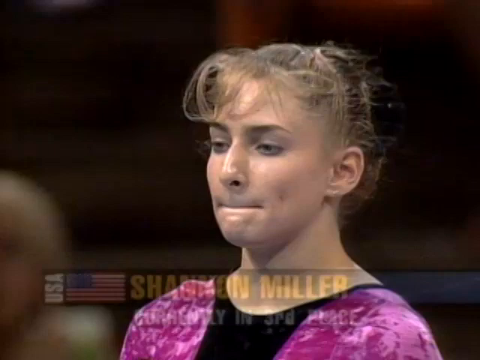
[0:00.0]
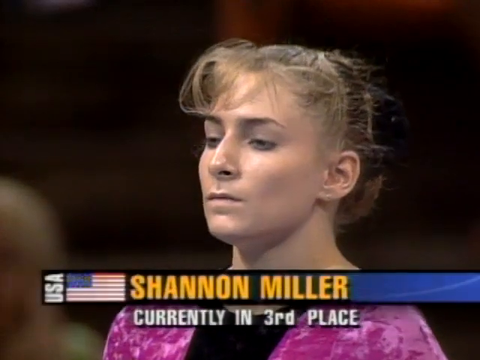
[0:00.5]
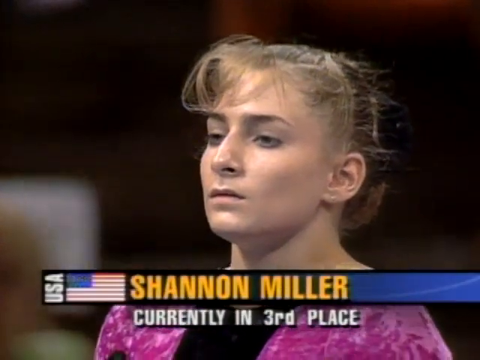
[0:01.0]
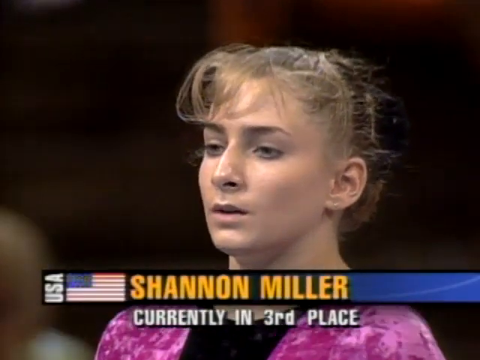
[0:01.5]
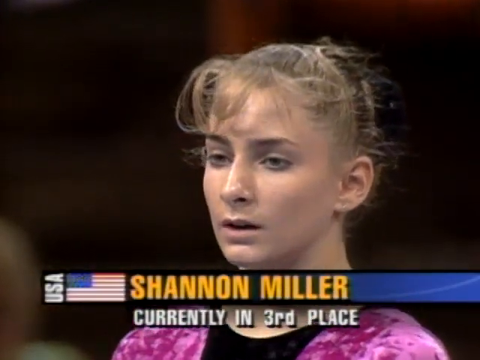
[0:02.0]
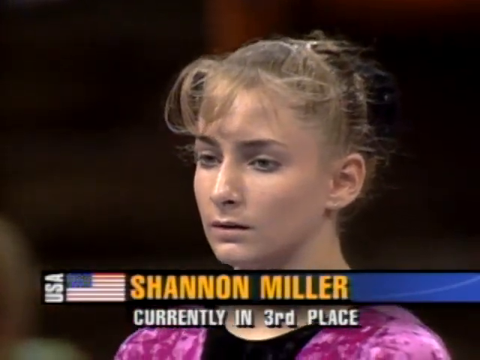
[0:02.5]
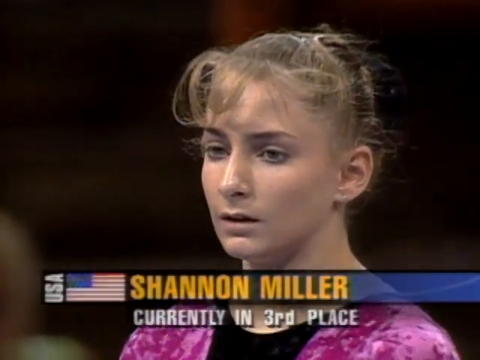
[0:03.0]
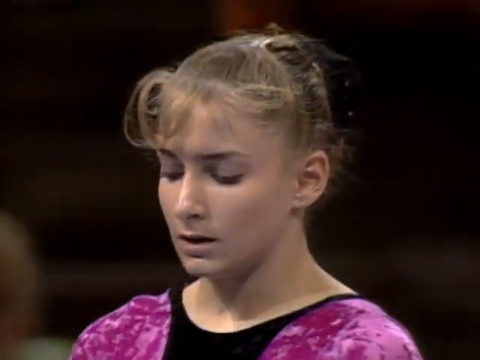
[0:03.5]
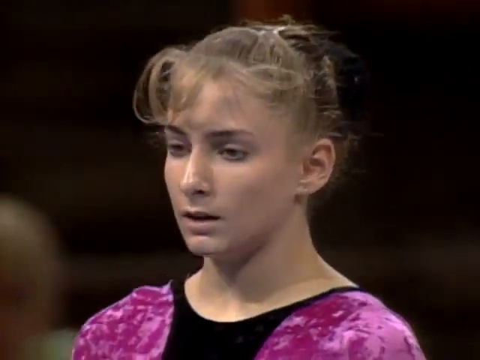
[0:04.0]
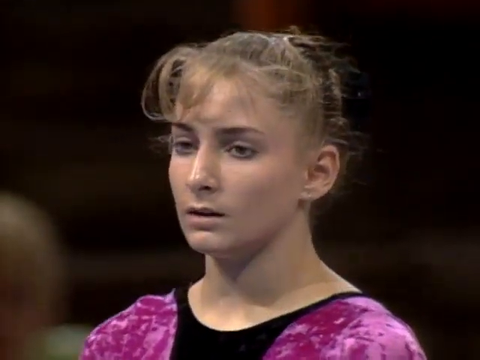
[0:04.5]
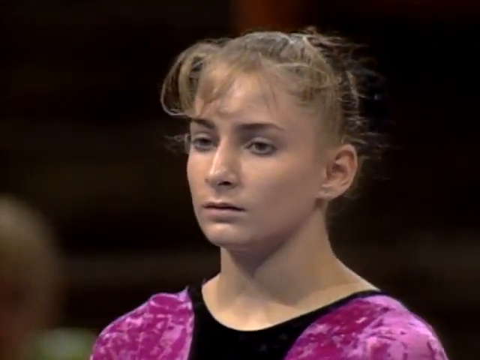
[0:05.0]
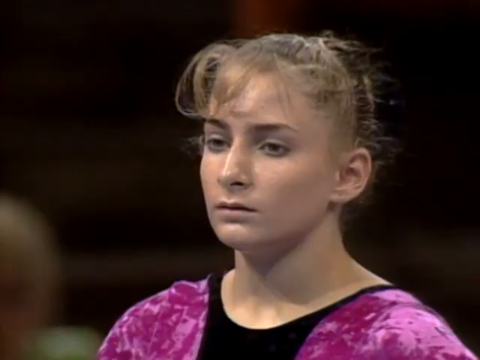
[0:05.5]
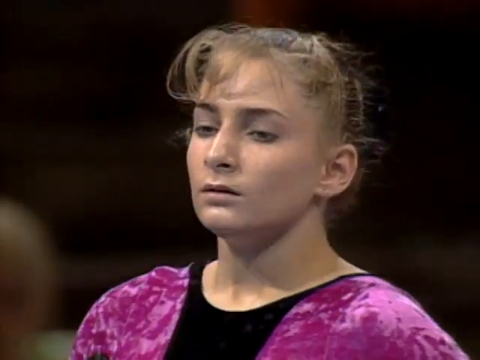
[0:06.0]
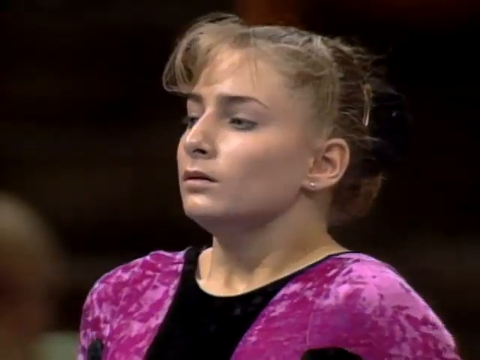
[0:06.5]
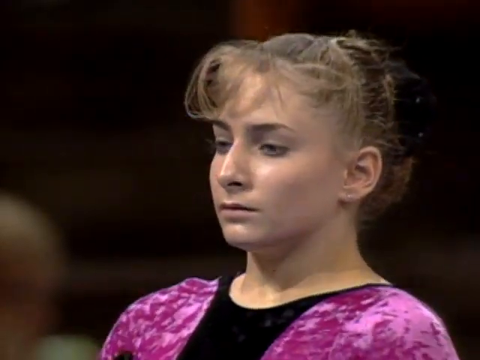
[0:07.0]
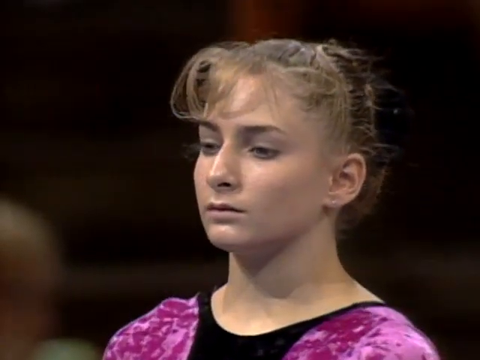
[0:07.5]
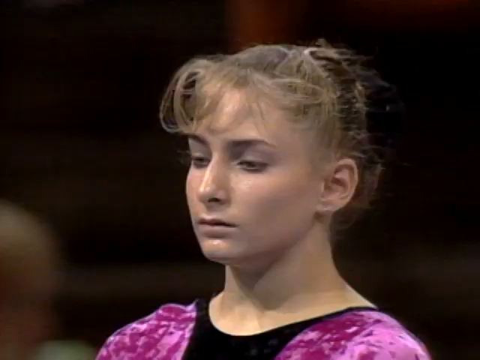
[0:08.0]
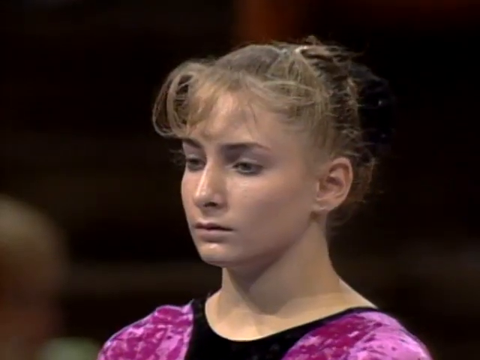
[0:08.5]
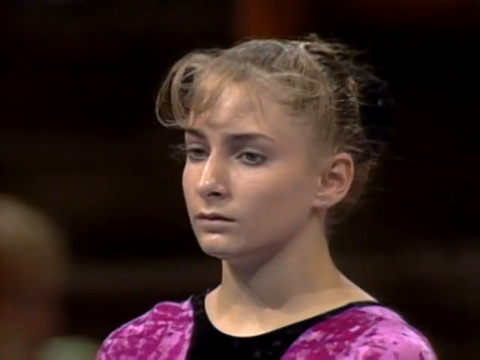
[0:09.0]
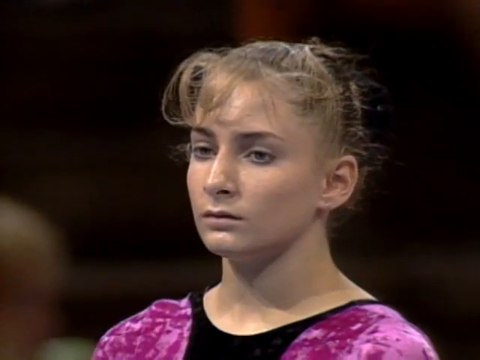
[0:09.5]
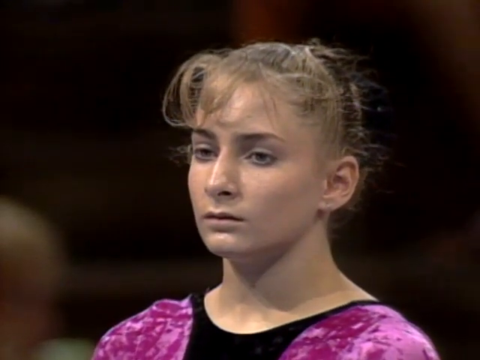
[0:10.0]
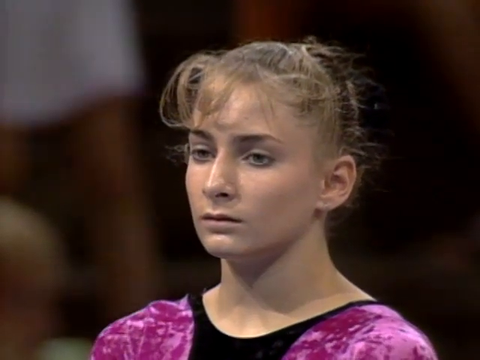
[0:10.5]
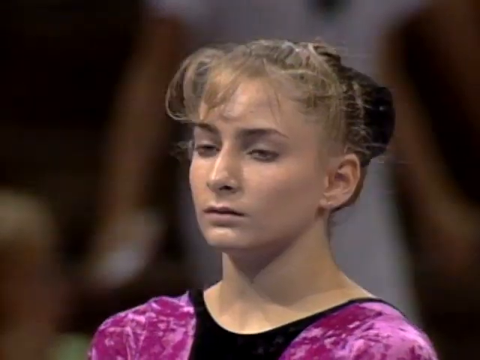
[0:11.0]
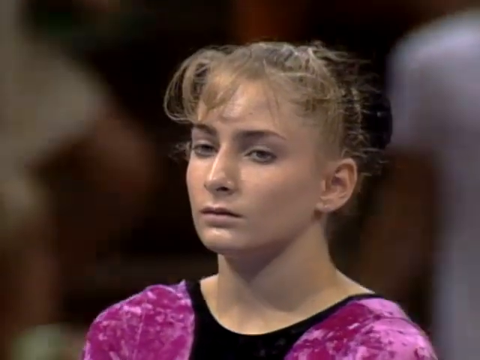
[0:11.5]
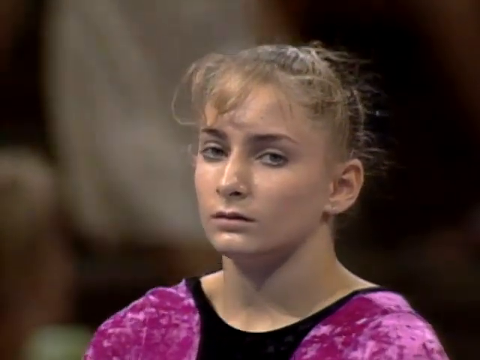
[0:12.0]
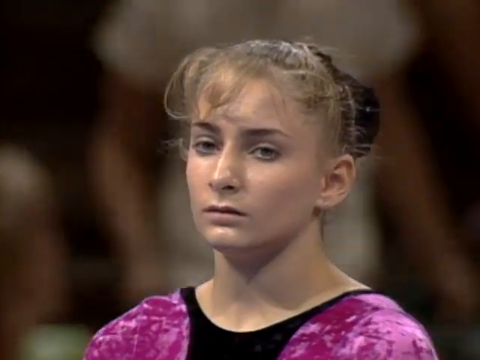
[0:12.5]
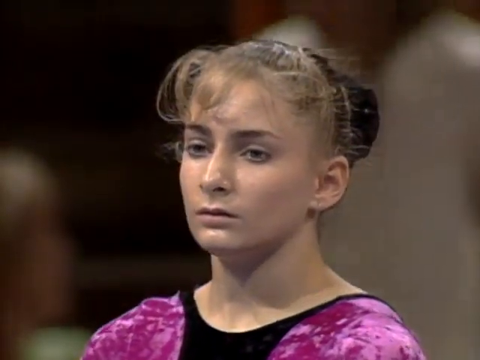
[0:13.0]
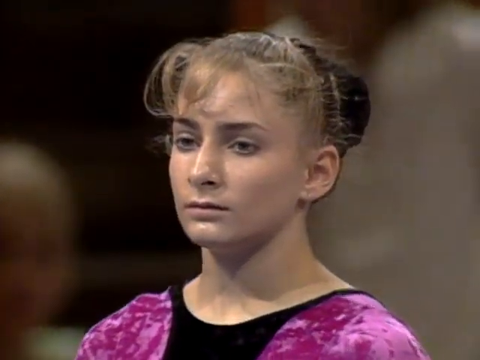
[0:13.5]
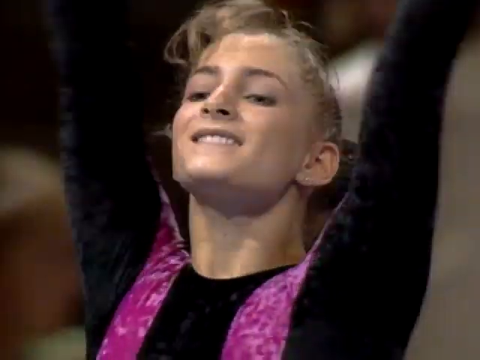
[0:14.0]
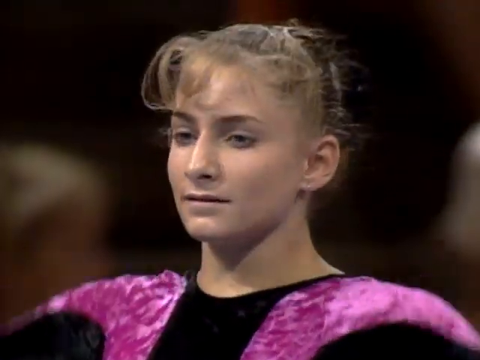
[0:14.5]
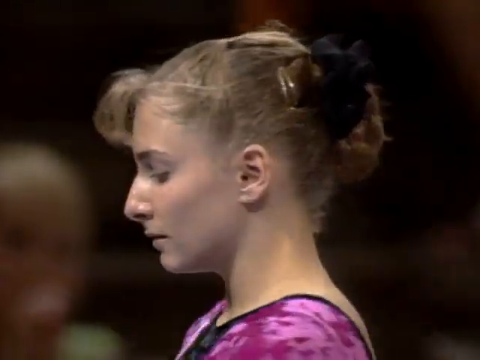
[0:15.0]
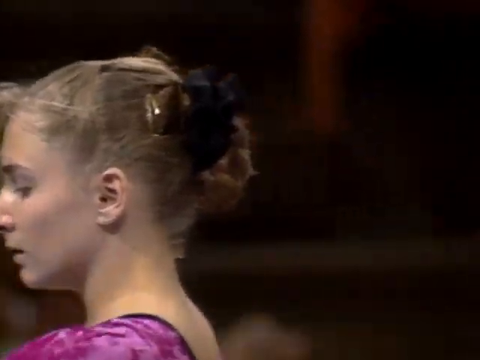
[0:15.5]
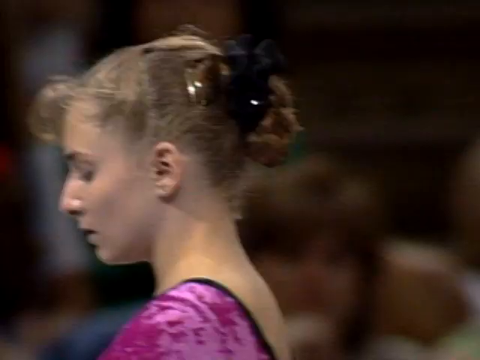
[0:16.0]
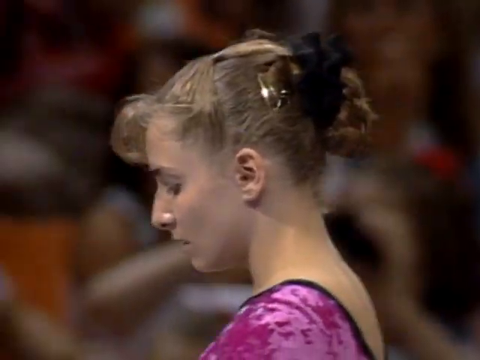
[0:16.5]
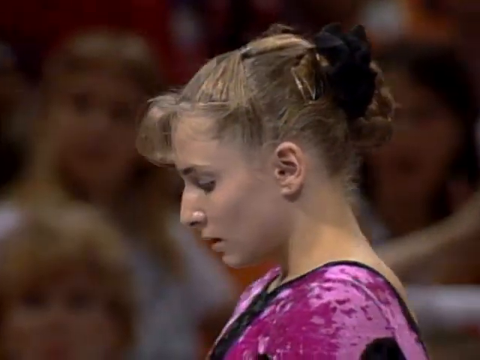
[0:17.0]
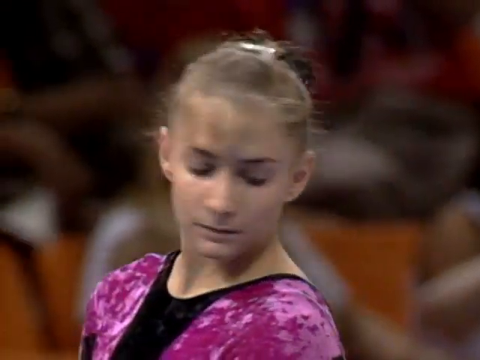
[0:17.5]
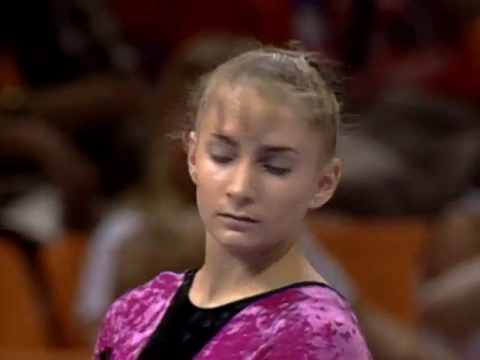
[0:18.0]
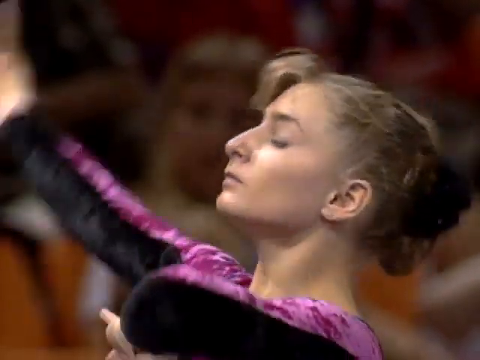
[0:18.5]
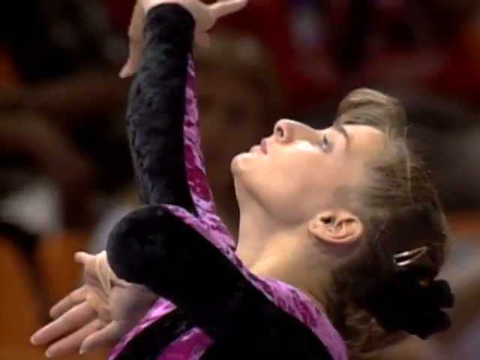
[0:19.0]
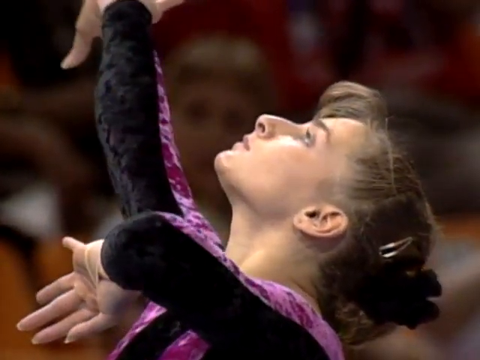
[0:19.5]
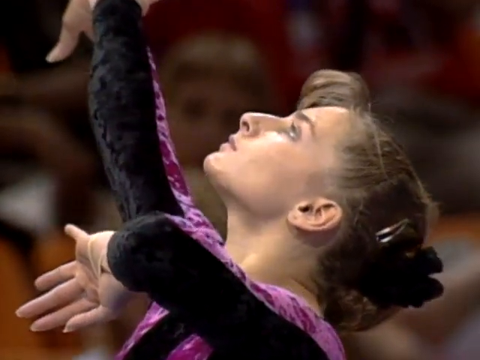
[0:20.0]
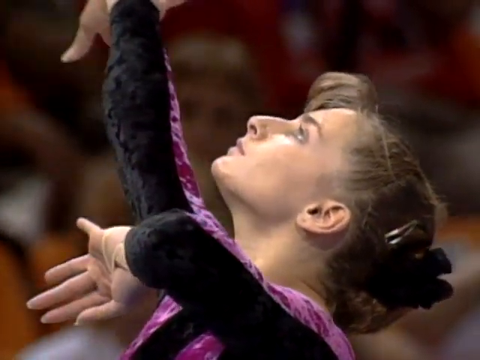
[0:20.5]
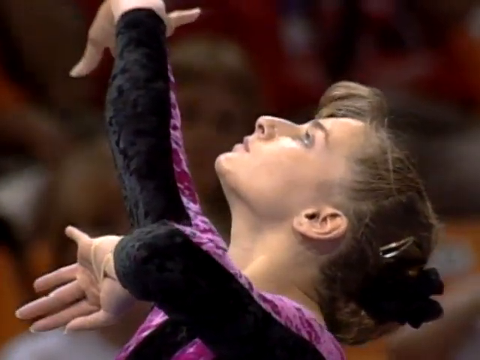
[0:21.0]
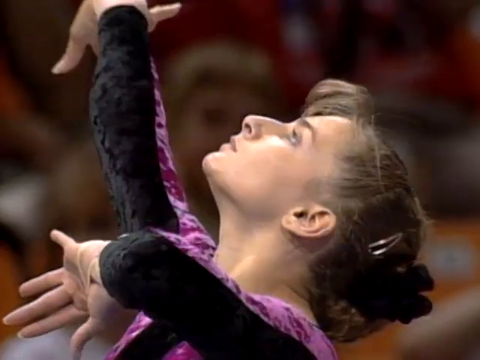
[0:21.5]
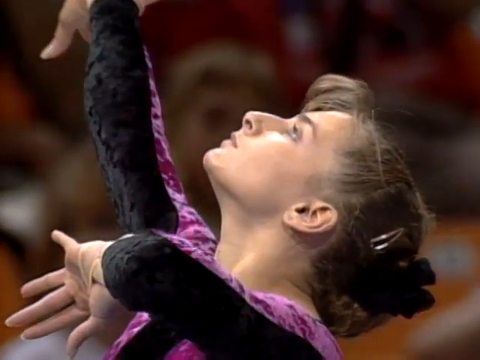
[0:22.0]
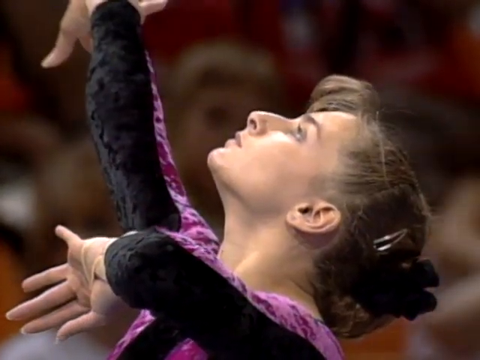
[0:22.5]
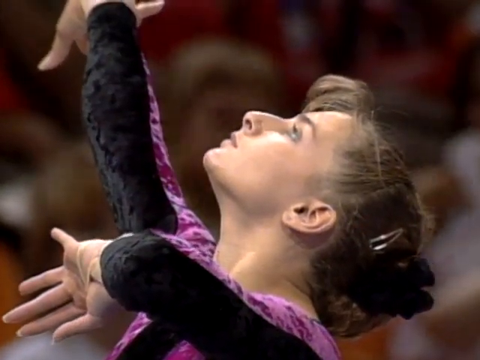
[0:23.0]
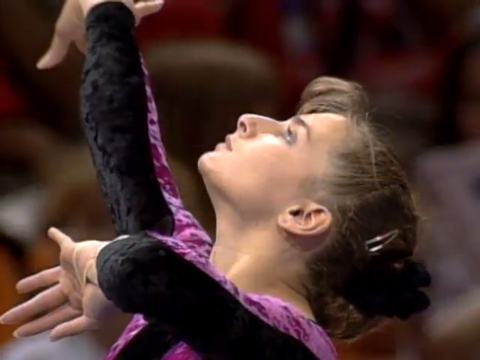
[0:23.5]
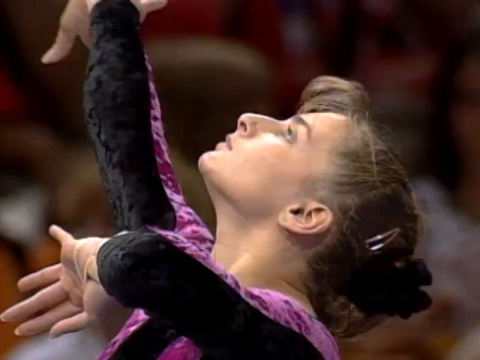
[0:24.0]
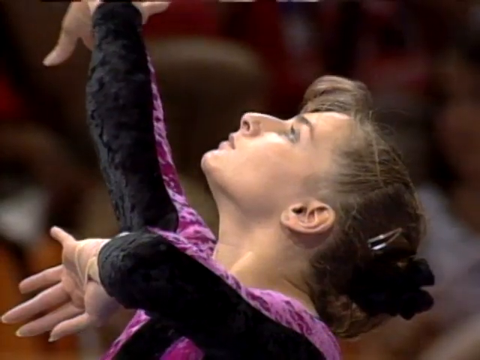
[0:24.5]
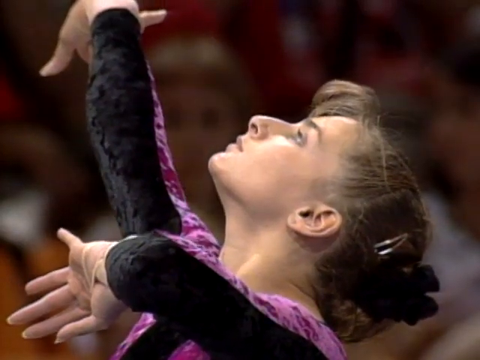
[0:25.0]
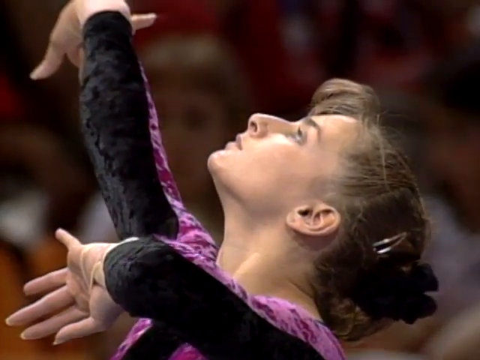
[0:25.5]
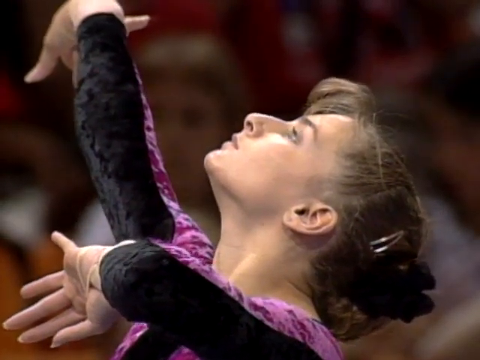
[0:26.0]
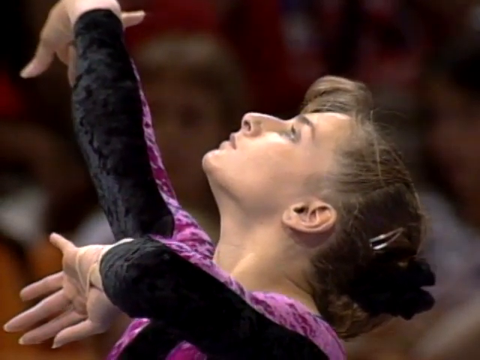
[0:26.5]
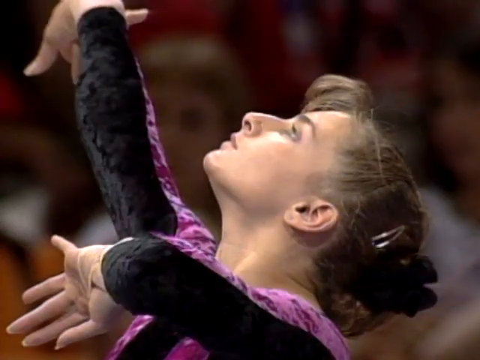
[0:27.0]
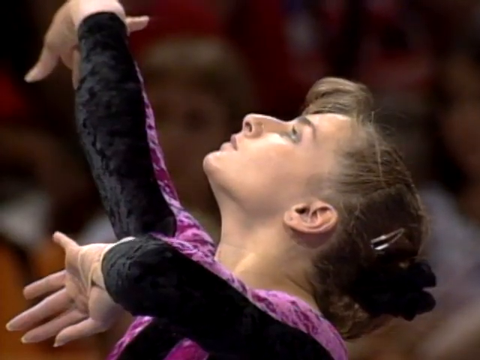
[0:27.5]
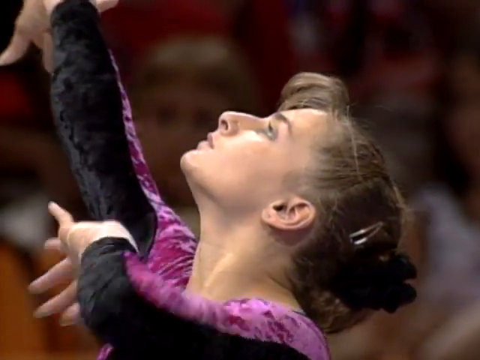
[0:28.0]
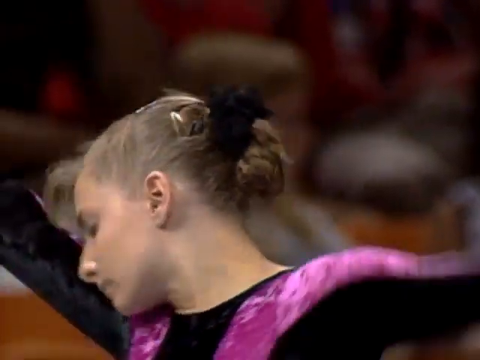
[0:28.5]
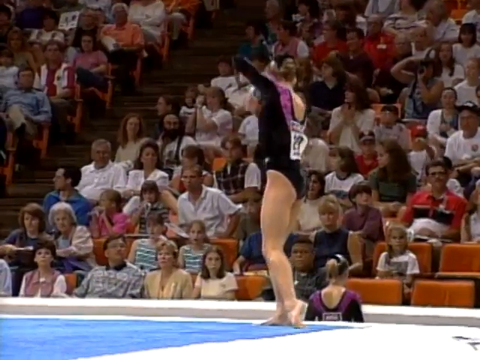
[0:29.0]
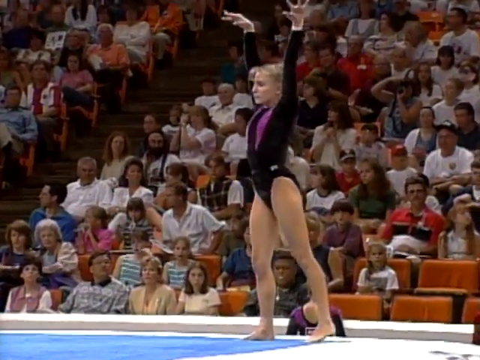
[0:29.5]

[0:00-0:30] This appears to be a gymnastics event from the mid to late 90s. A girl with short blonde hair steps up, and text comes up at the bottom of the screen reading "Shannon Miller USA," indicating she is currently in third place. Her leotard is black with some purple in it, though not much purple. Only her face is on screen as she takes a breath and focuses on what is in front of her; she is clearly very focused. Some blurry people from the crowd walk behind her. She gets into position to start her routine, looks up, puts one arm up and holds the pose, then moves her arms down and begins her routine. In the stands the seats are orange, and there is a fairly large crowd; a couple of seats are empty, but not many.